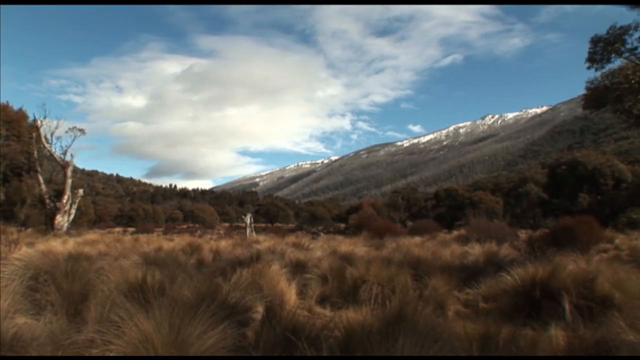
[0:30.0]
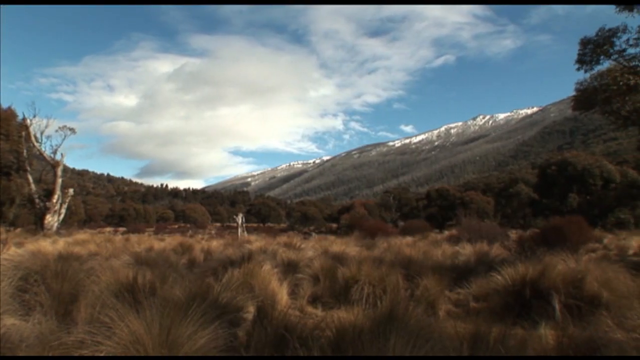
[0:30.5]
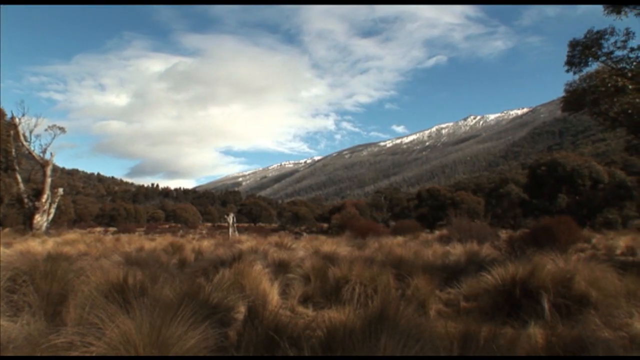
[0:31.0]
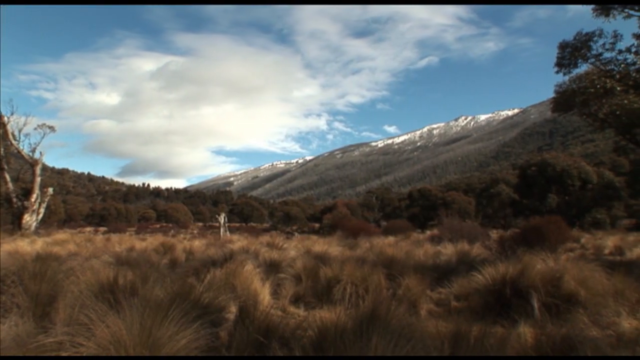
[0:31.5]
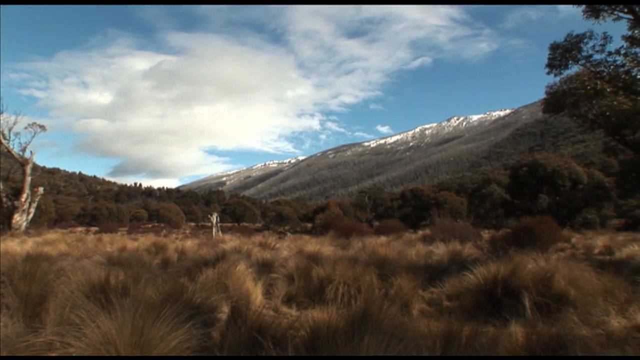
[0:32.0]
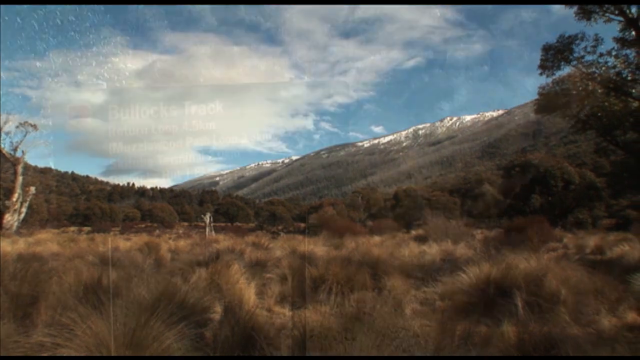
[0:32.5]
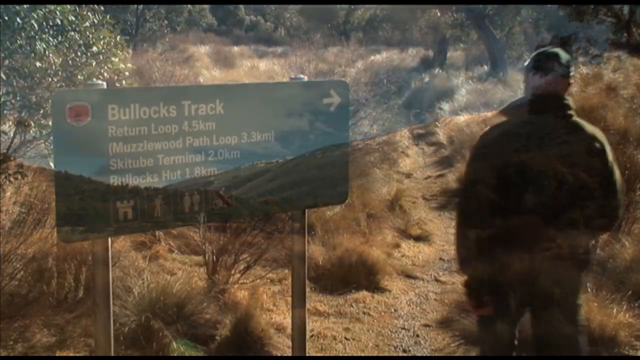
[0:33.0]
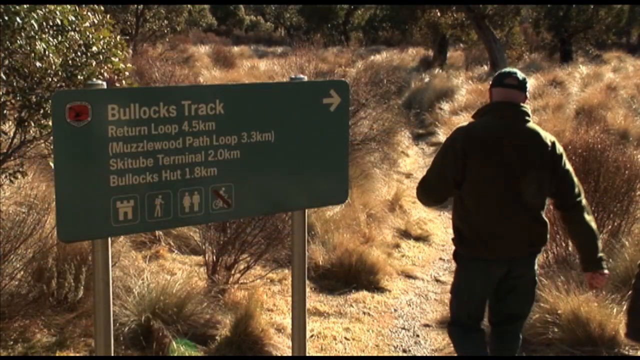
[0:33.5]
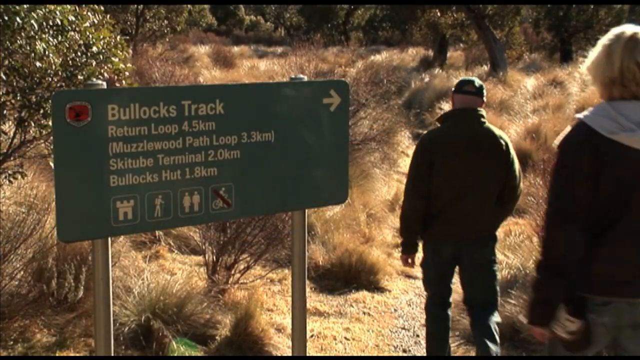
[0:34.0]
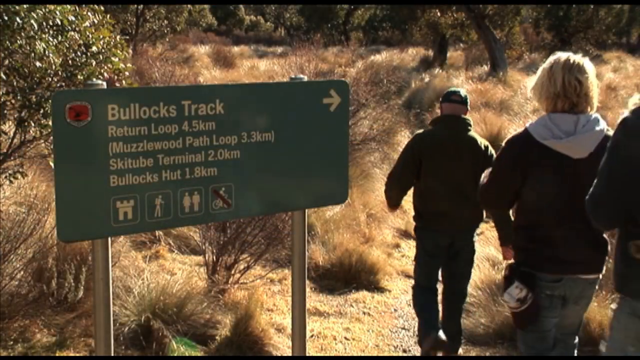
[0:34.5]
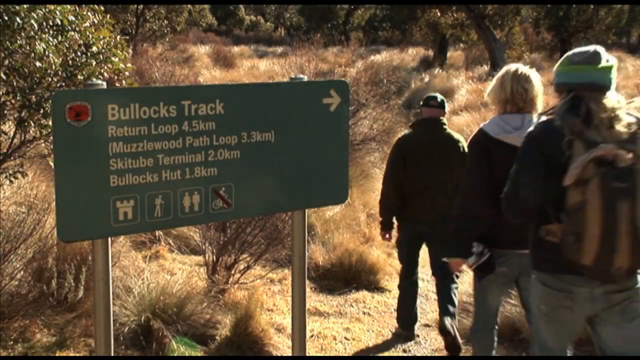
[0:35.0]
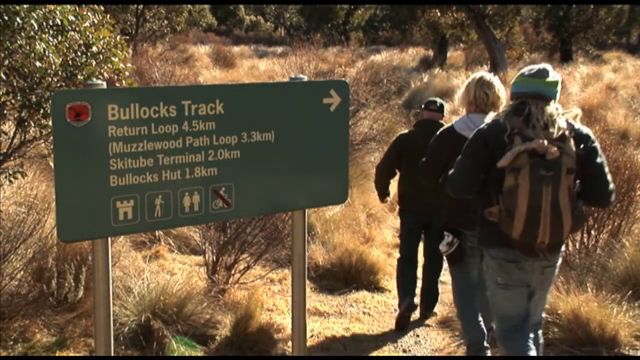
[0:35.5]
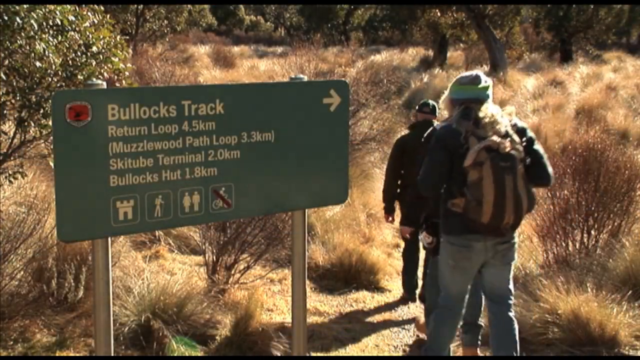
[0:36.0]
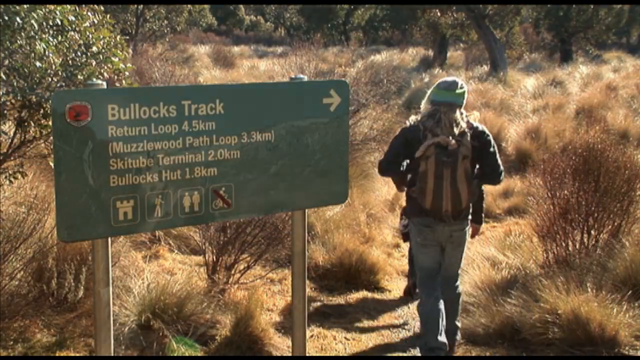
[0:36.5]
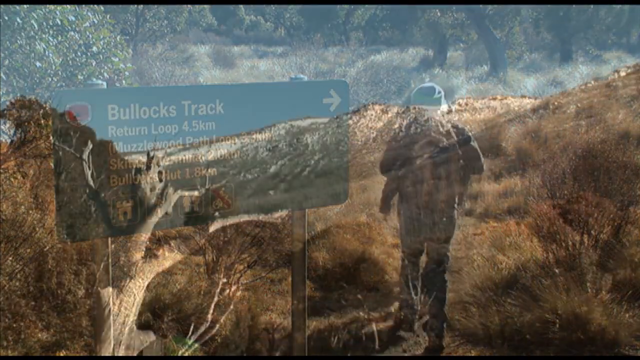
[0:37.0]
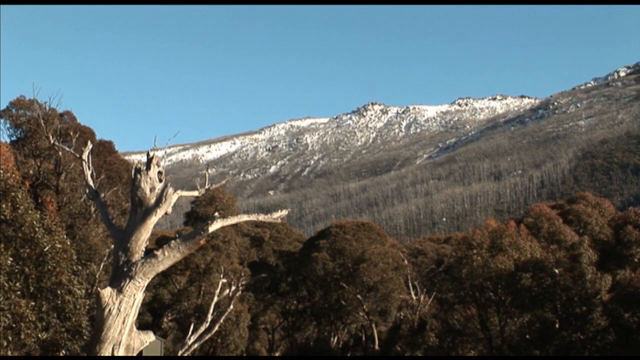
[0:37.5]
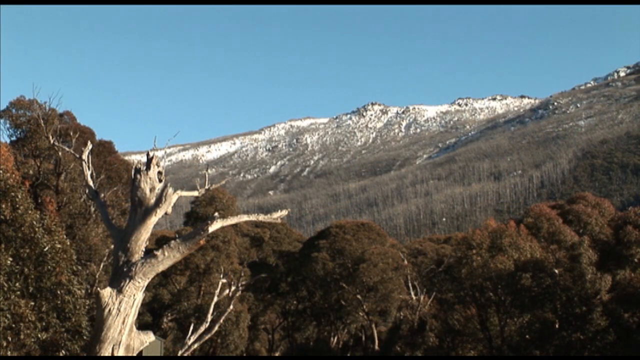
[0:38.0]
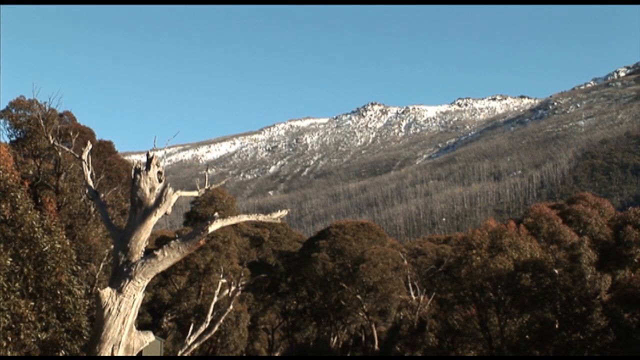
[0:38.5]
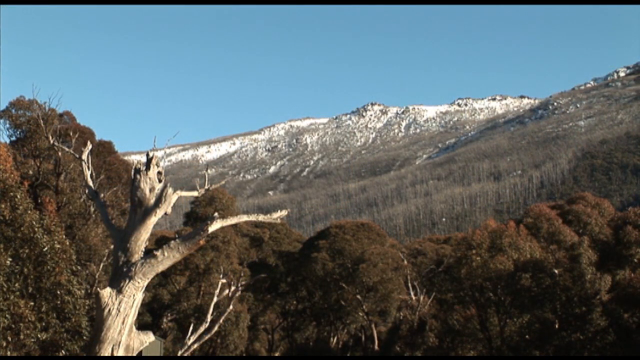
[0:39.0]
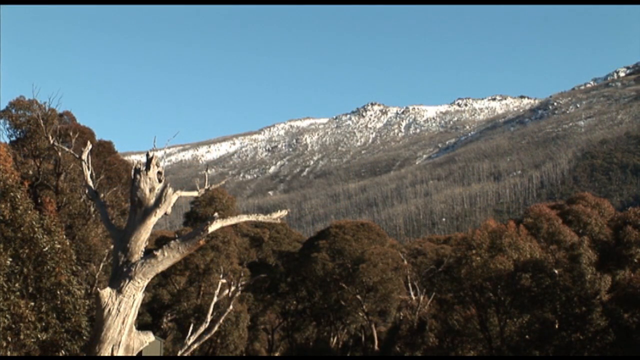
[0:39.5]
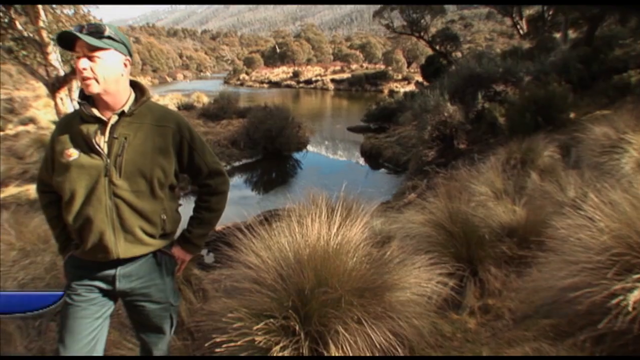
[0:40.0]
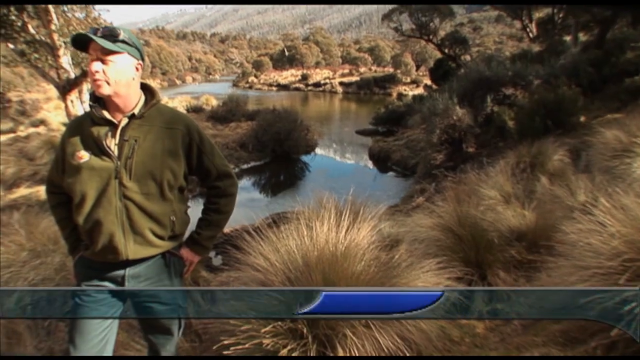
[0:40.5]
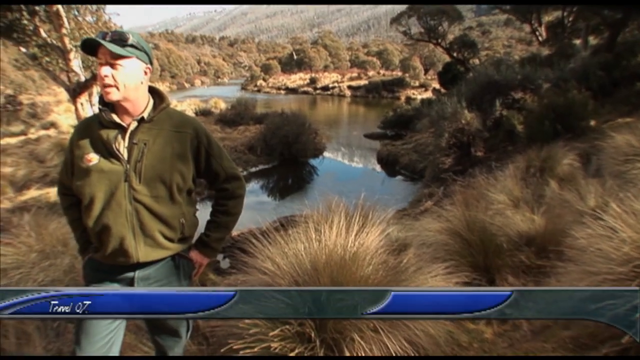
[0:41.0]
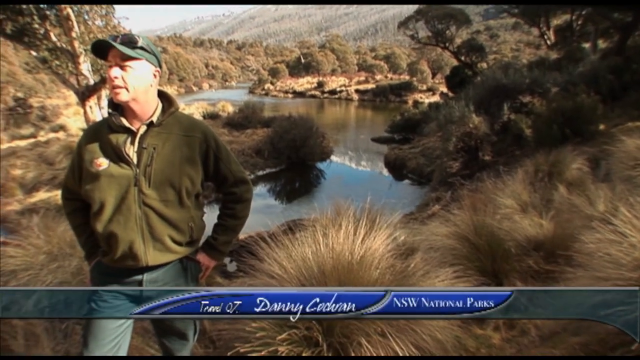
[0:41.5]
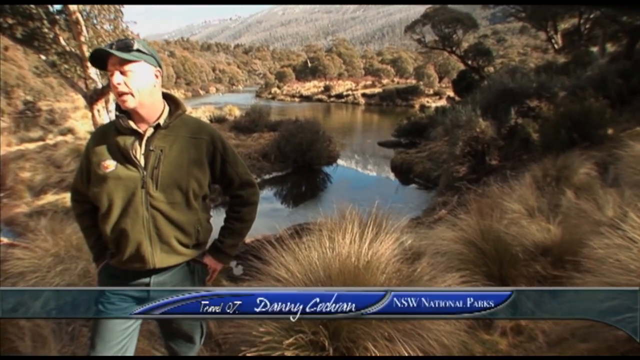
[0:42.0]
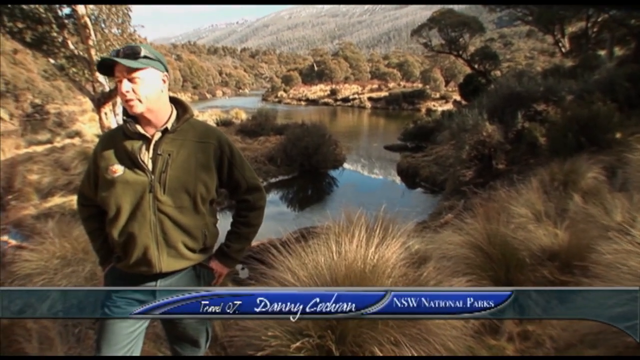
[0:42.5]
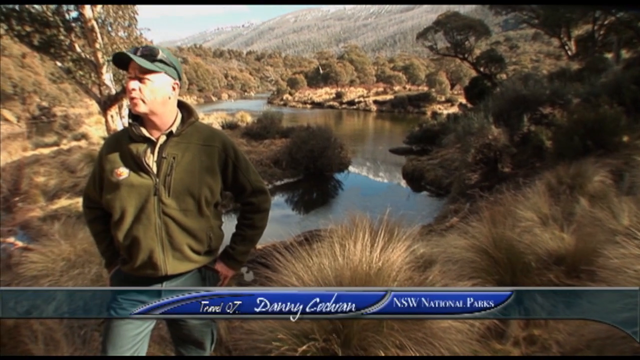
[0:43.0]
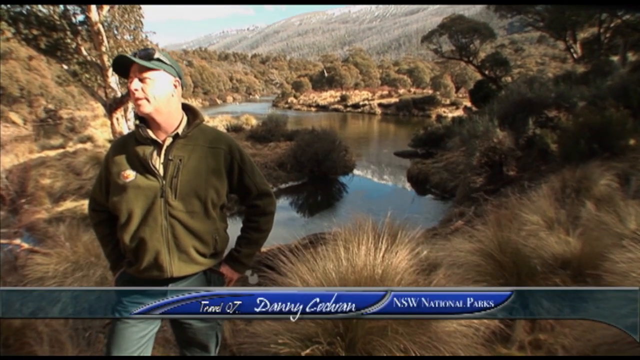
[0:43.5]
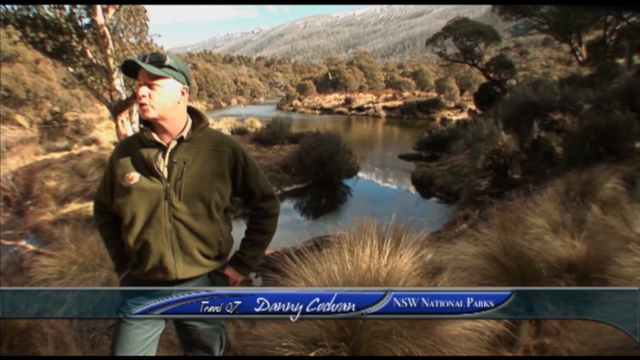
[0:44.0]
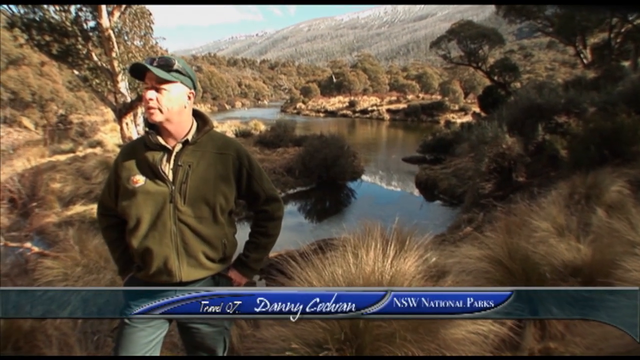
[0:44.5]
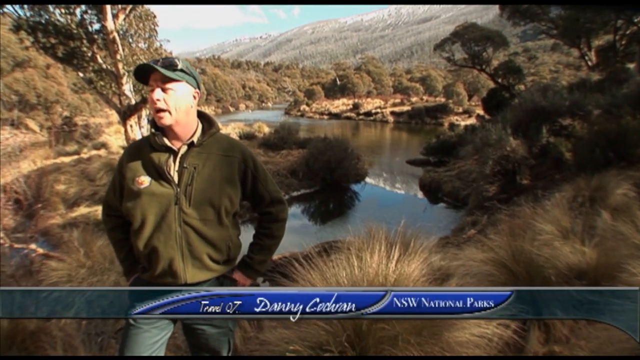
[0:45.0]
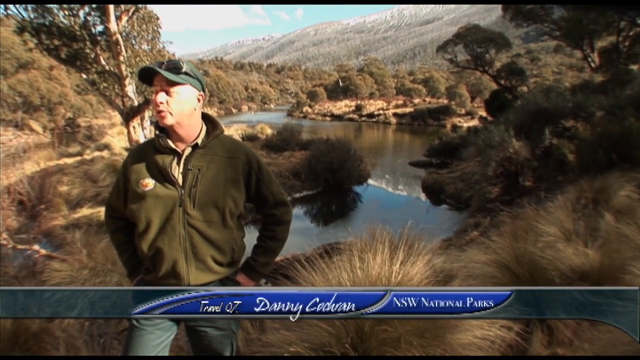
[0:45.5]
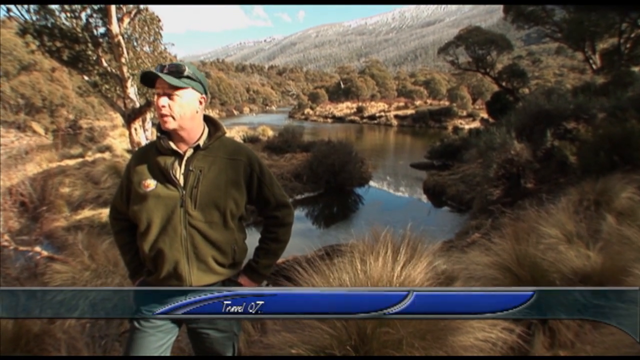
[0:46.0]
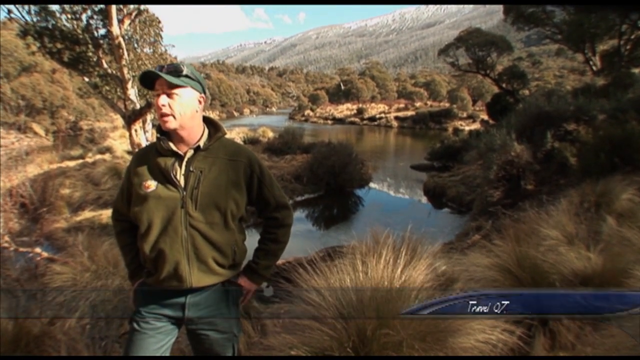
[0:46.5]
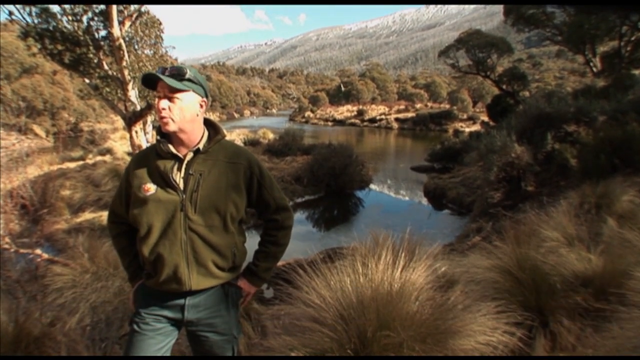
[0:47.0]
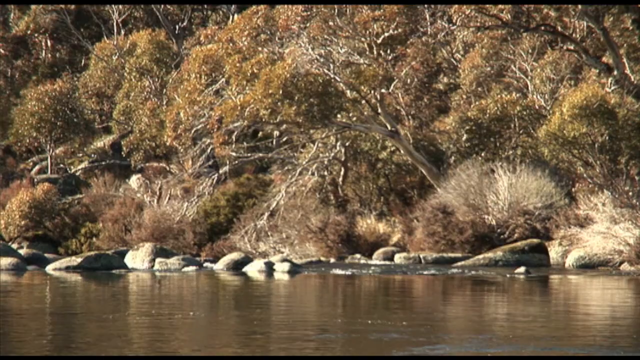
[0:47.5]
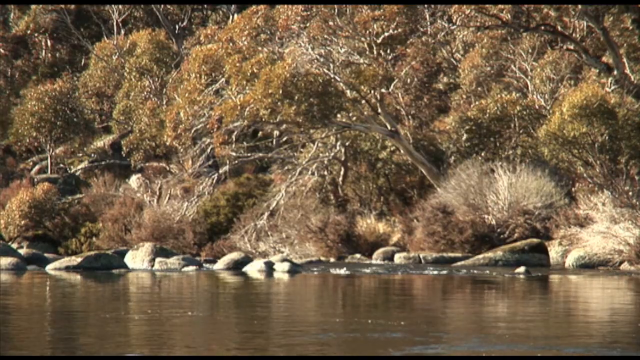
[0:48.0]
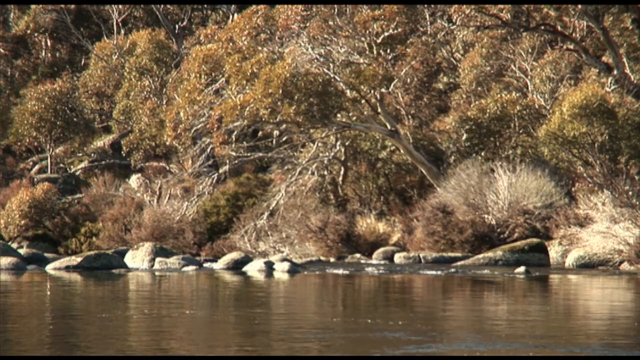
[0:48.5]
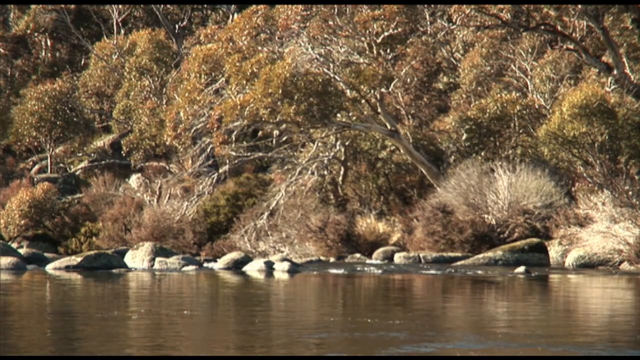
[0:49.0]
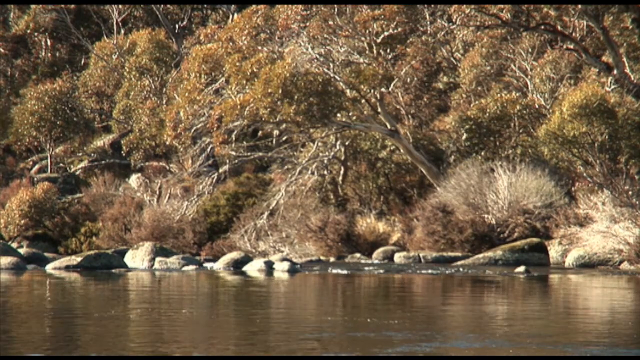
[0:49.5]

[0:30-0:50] A mountainous scene has a dip in the middle, a blue sky at the back with a large white cloud, a tree without leaves on the left-hand side, and grassy scrubland in the foreground. A green sign reads "Bullock's Track Return Loop 4.5km", "Muzzlewood Path Loop 3.3km" (in brackets), "Ski Tube Terminal 2.0km" and "Bullock's Hut 1.8km", with small icons: what looks like a castle, someone who looks like they are hiking, two people next to each other, and someone riding a bike with a cross through it. There is a white arrow to the top right of the sign. The hikers come in from the right-hand side of the screen: a man wearing a cap at the front, then someone with blonde hair in a pale hoodie, then someone in a woolly hat at the back carrying a striped brown rucksack and wearing jeans. Another image shows a snowy mountain with a tree on the left-hand side that has no leaves or branches. The shot then cuts to a man wearing a green hat with glasses resting on its peak and a green fleece with a logo on the right lapel, his thumbs tucked into his back pockets.